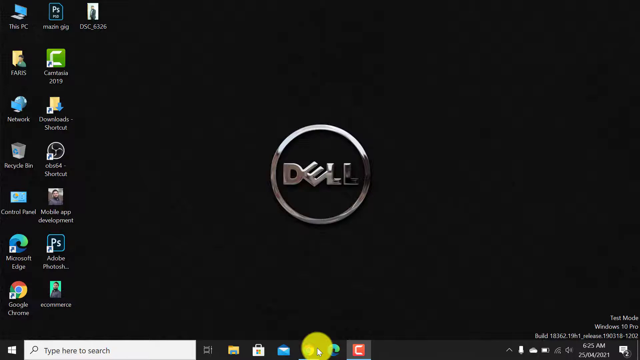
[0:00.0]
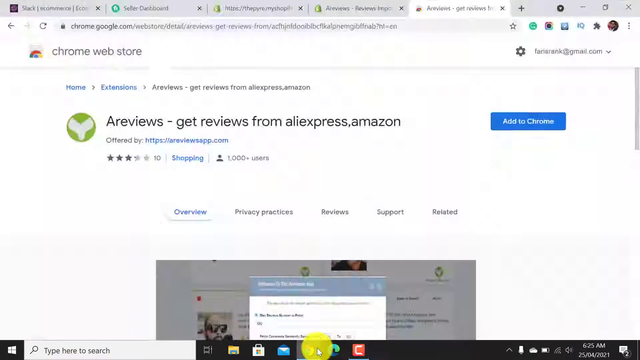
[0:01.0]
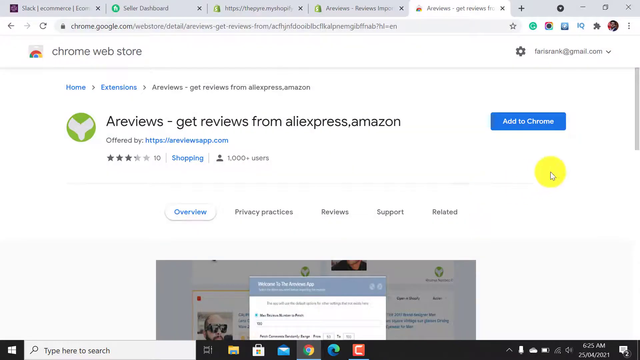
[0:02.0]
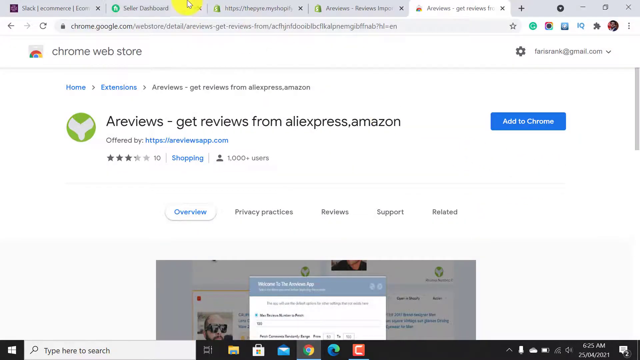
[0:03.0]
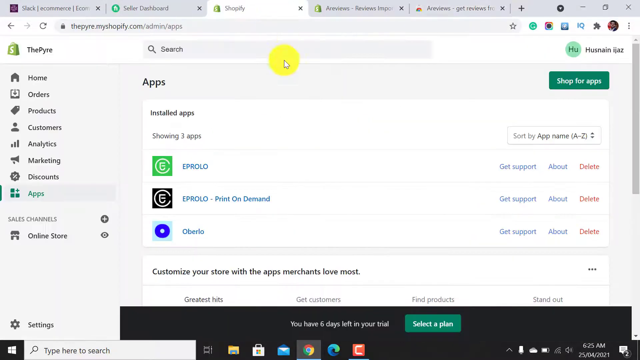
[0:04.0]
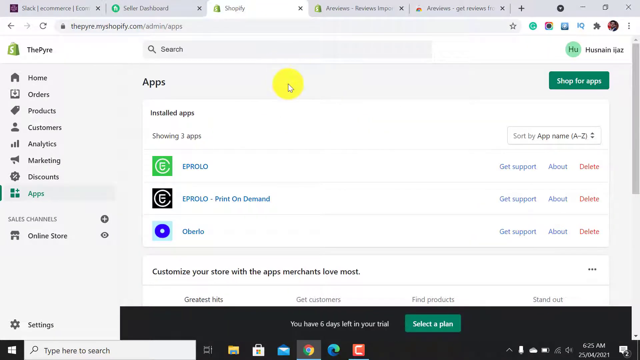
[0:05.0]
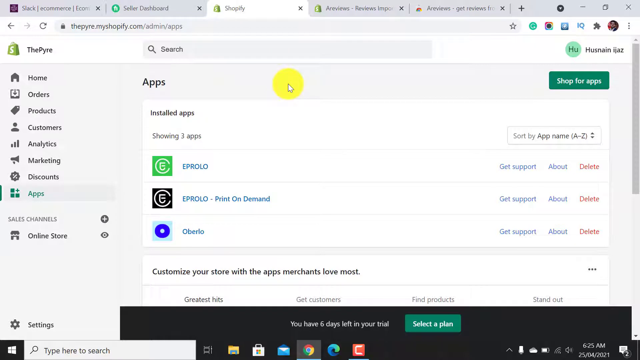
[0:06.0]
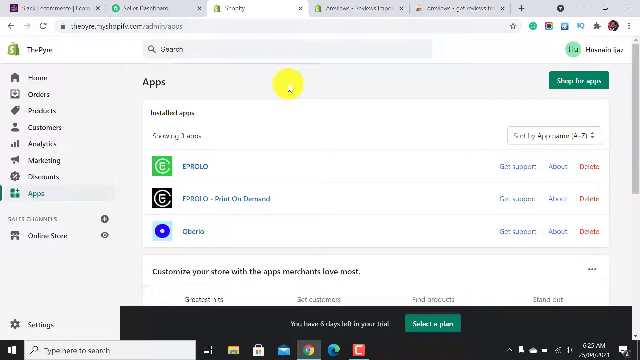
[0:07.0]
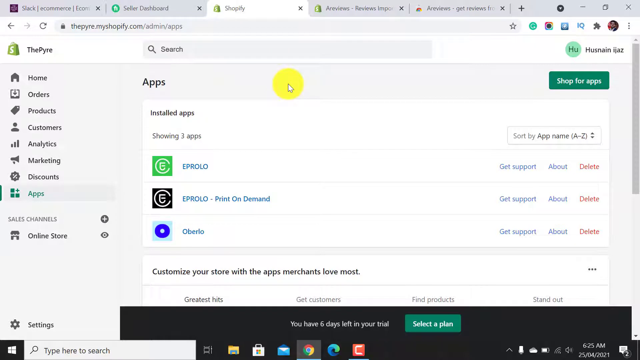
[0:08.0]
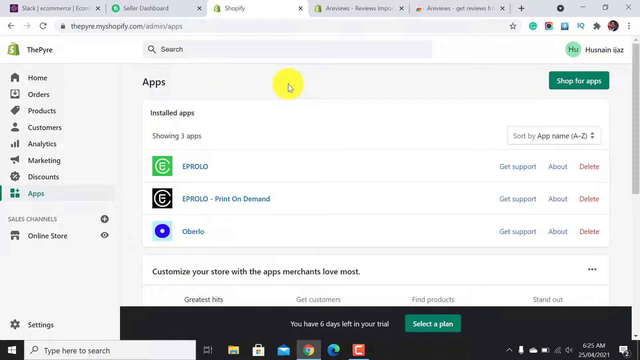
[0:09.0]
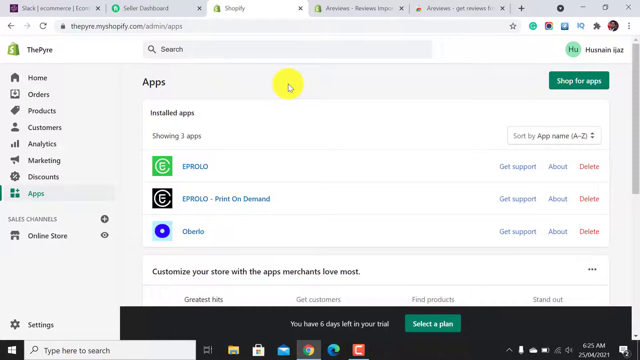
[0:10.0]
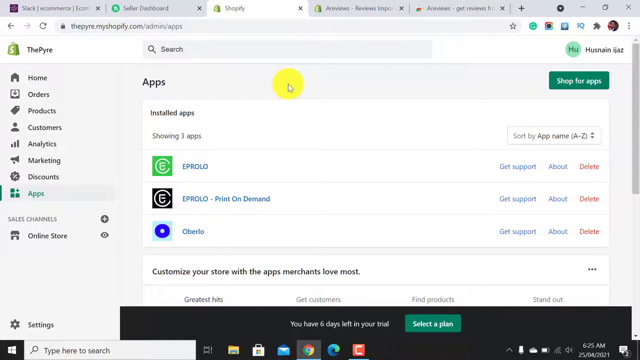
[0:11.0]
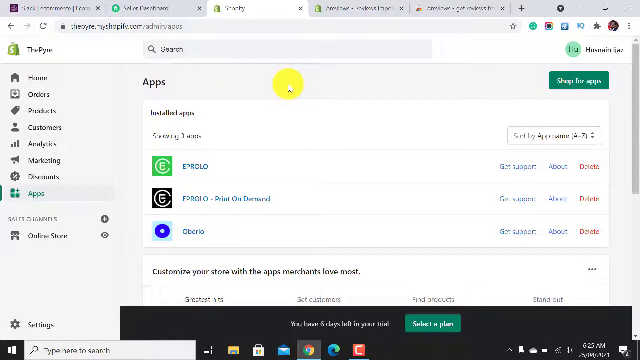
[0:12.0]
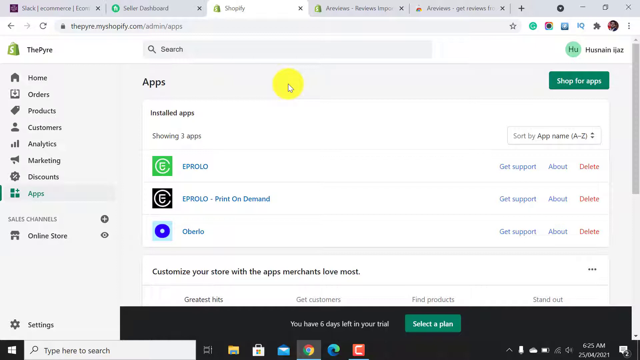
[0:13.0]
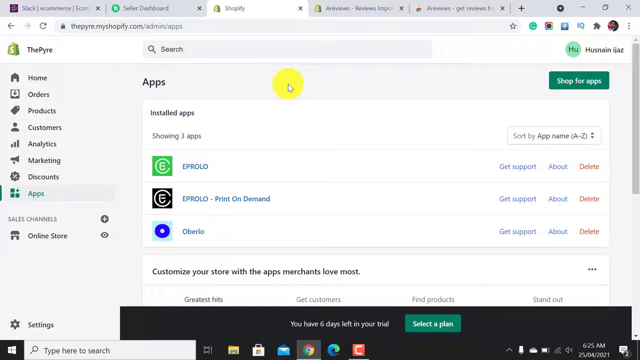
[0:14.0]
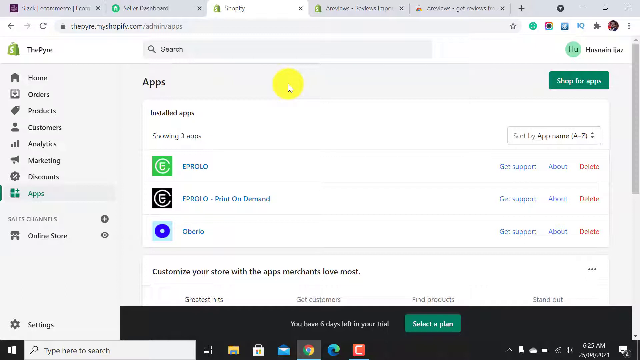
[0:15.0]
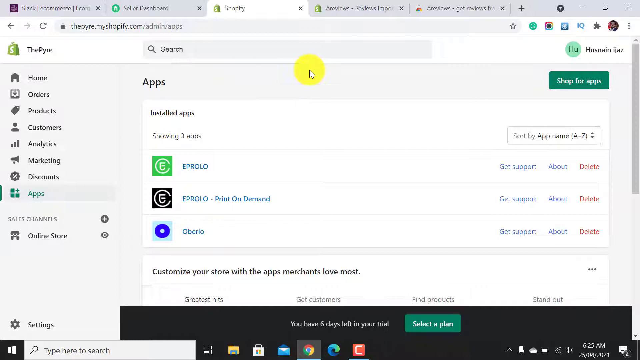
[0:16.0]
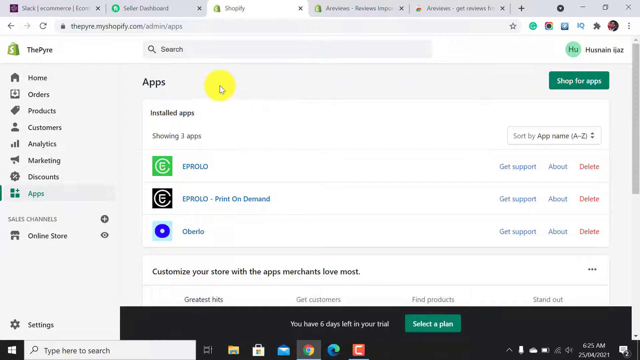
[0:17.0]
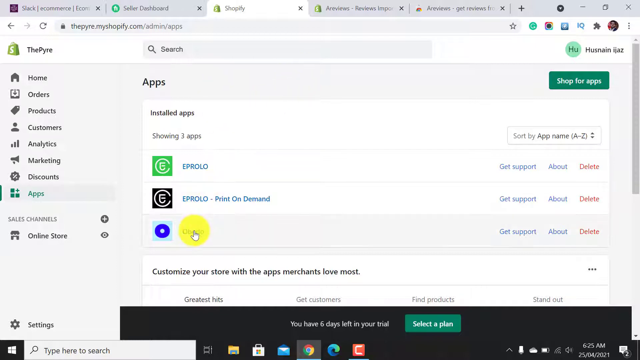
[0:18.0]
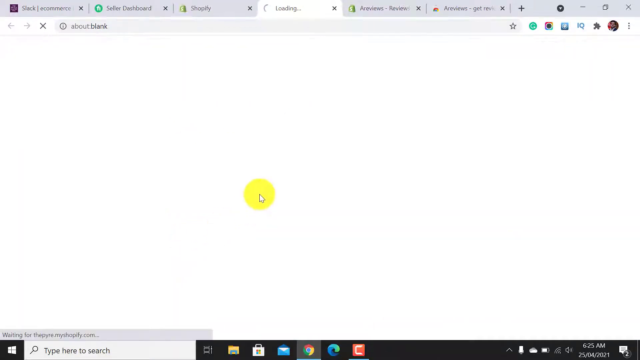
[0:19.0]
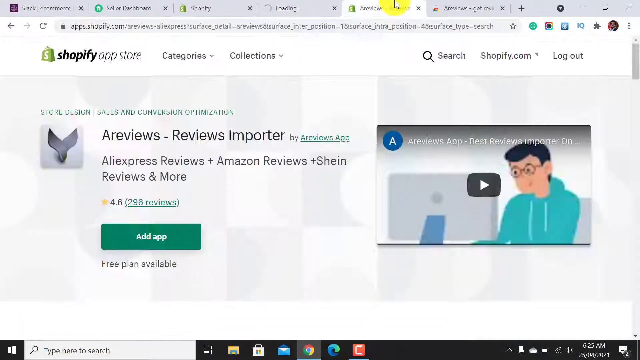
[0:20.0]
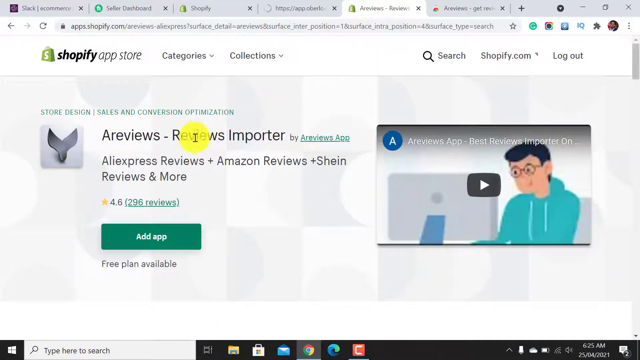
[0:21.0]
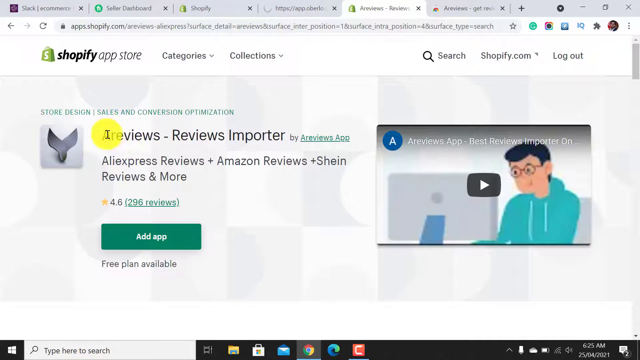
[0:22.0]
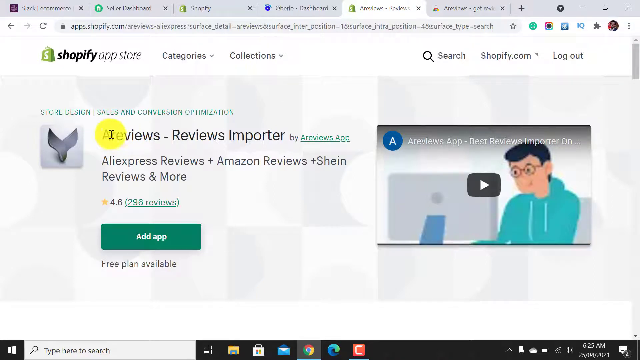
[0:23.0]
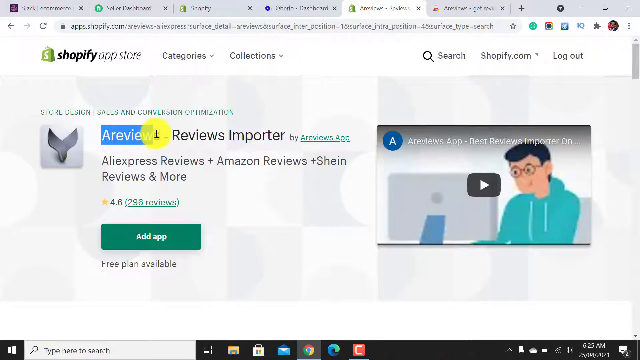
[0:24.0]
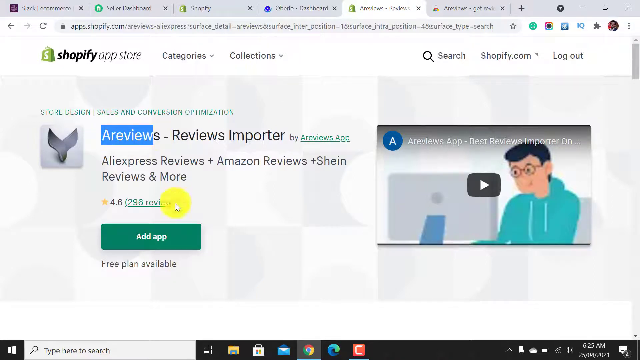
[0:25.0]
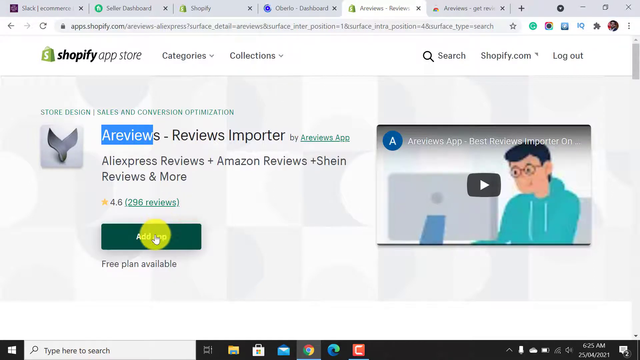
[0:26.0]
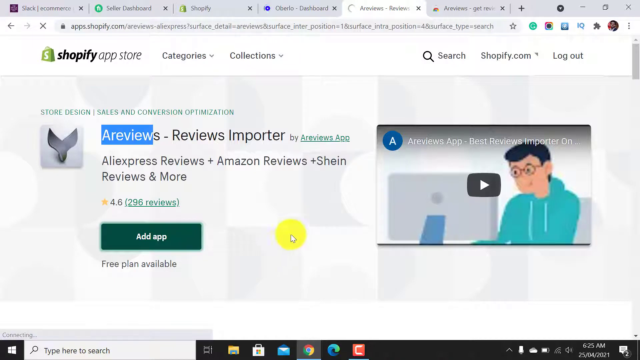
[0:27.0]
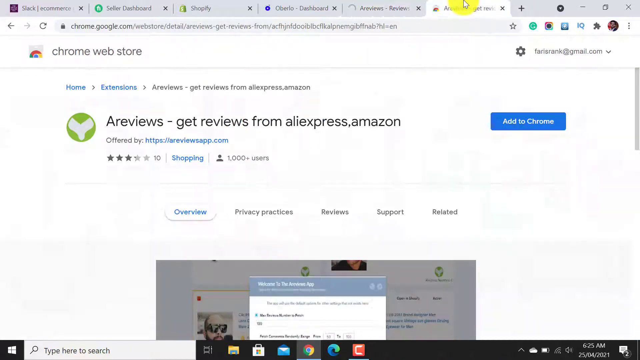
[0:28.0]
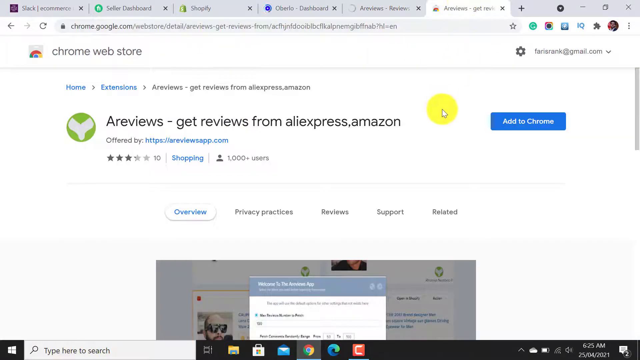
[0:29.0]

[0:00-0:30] A Dell desktop with icons is on screen, and a Chrome window opens to a Chrome Web Store page for A reviews, "get reviews from AliExpress, Amazon," with the option to add it to Chrome. The mouse moves around the screen, and five windows are open. The view goes to a Shopify screen listing apps: EPROLO, EPROLO print on demand and Oberlo, along with "customize your experience" and "shop for apps." The mouse moves around the window, and the view moves to the Shopify App Store, under Categories and Collections, showing A-Reviews, Reviews Importer, with an option to add the app. A small video is embedded on the page, titled "A-Reviews App, Best Reviews, Importer On," probably a description of how the extension works. "A-Reviews, Add App" is highlighted, and the view moves to another screen.